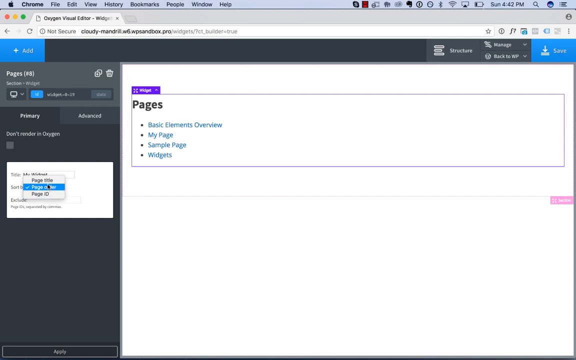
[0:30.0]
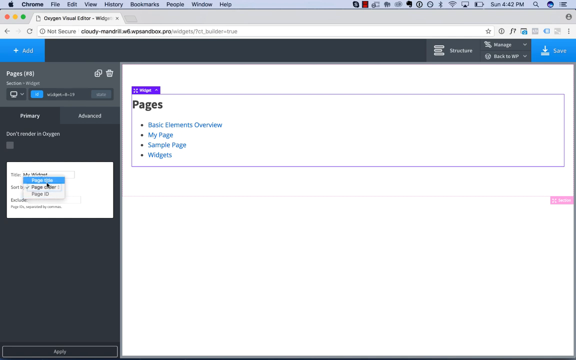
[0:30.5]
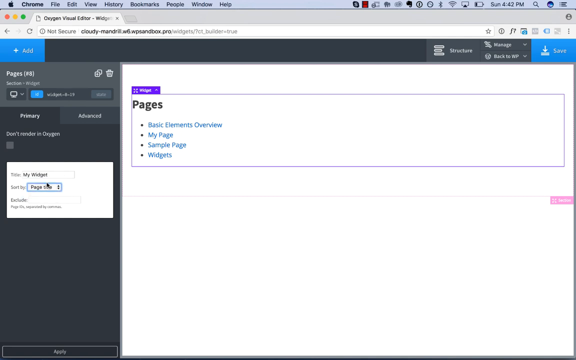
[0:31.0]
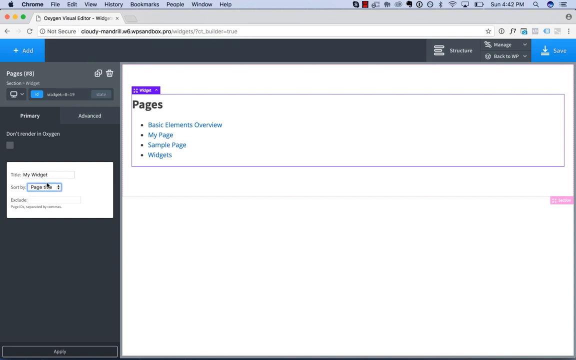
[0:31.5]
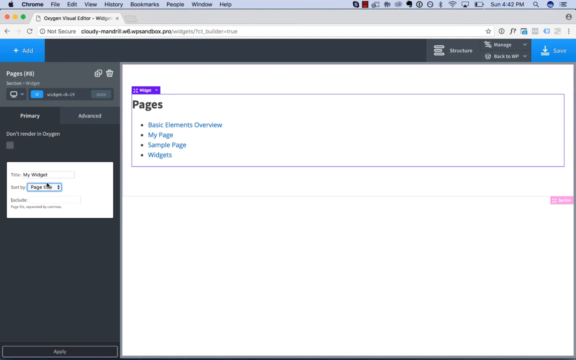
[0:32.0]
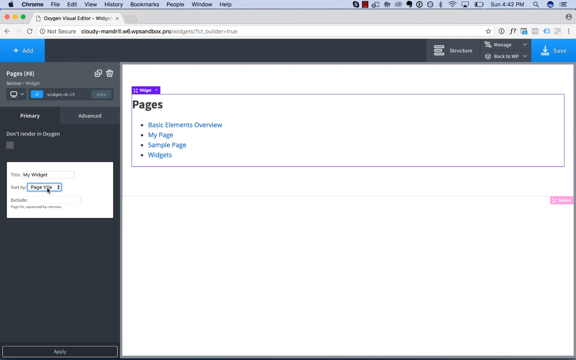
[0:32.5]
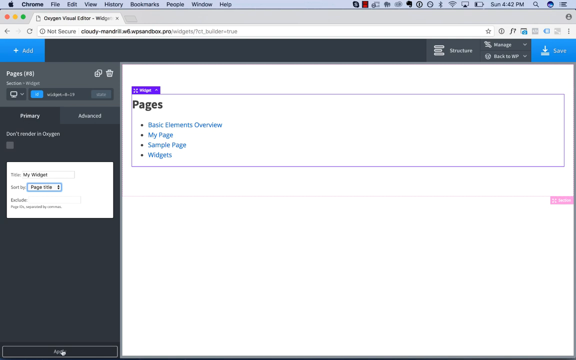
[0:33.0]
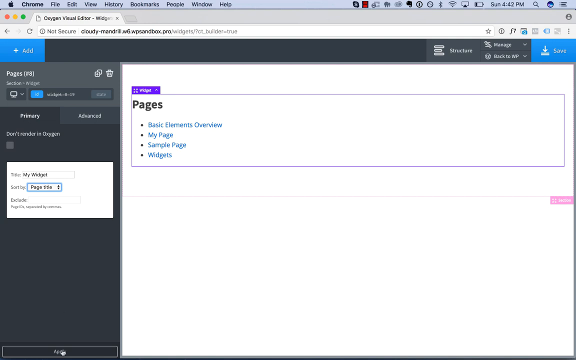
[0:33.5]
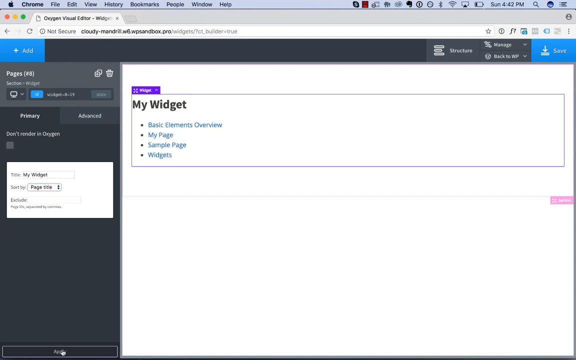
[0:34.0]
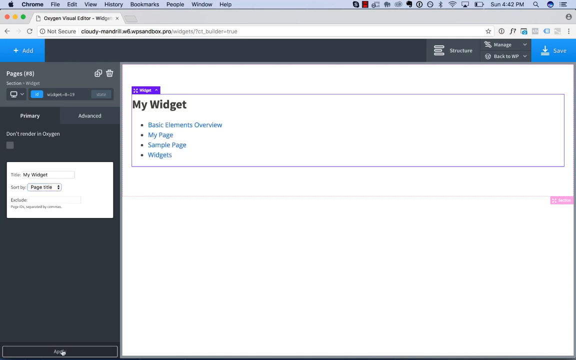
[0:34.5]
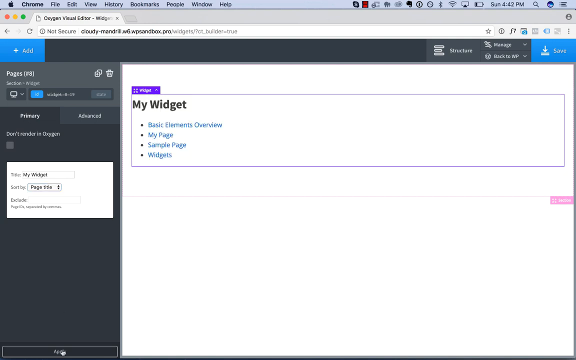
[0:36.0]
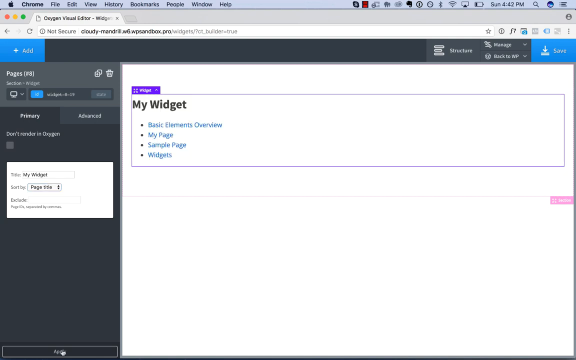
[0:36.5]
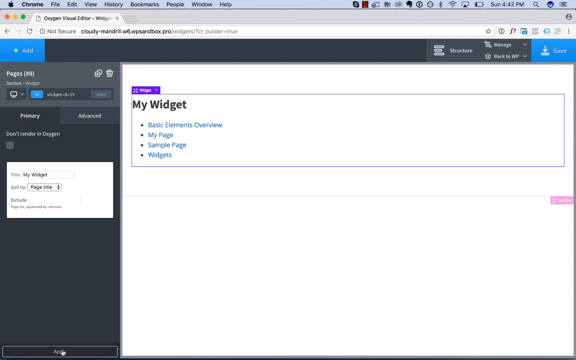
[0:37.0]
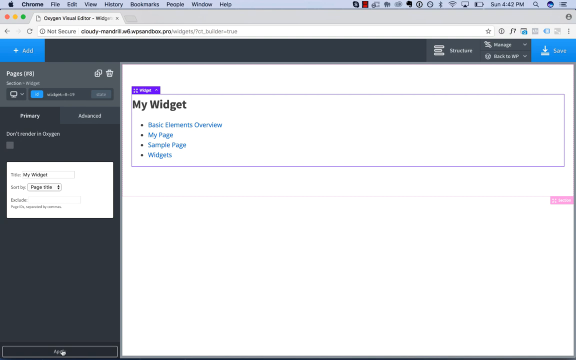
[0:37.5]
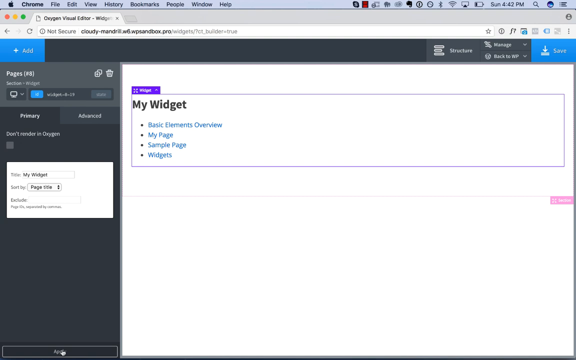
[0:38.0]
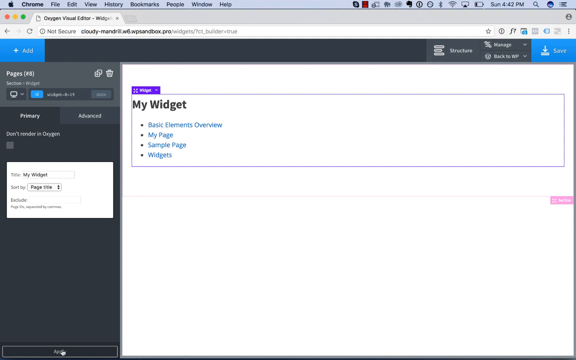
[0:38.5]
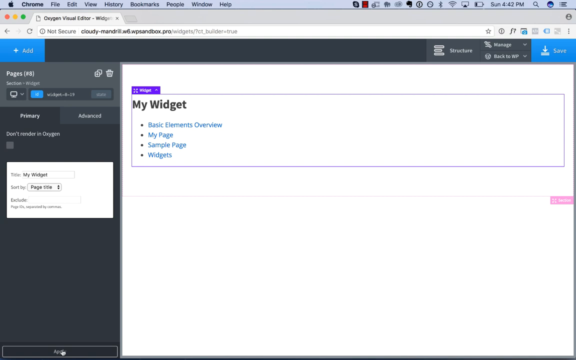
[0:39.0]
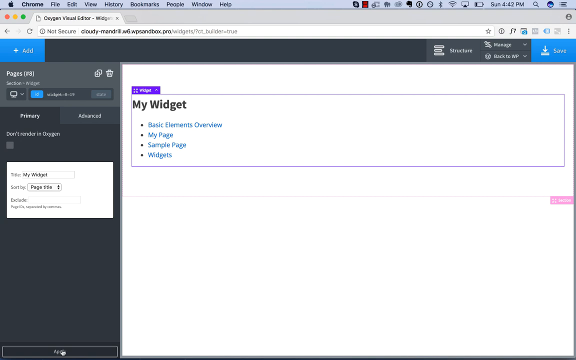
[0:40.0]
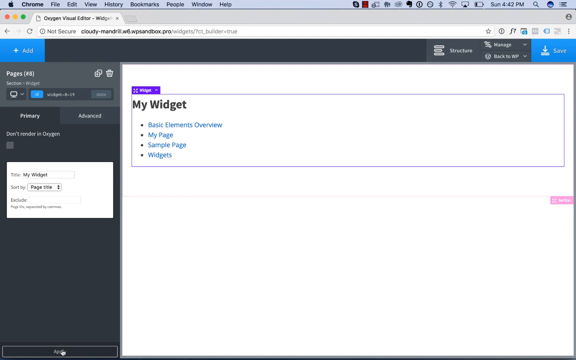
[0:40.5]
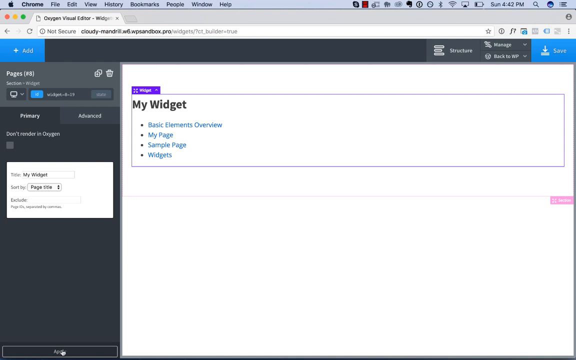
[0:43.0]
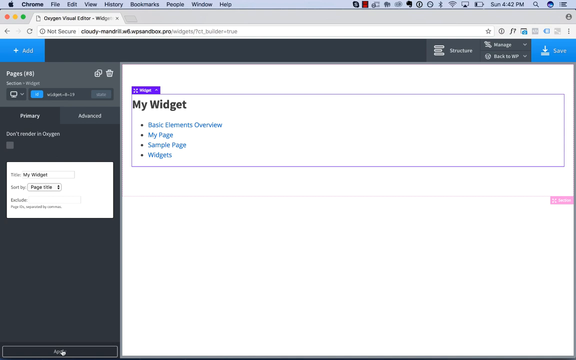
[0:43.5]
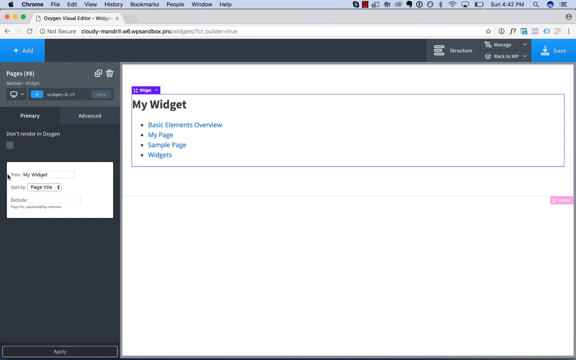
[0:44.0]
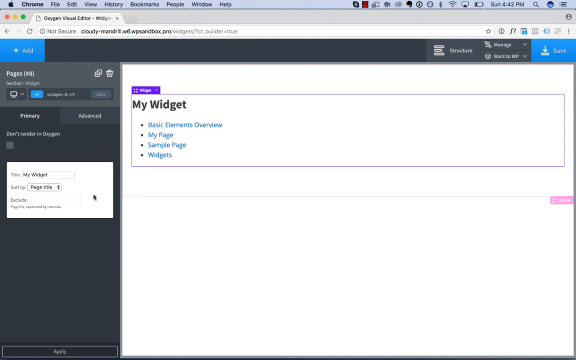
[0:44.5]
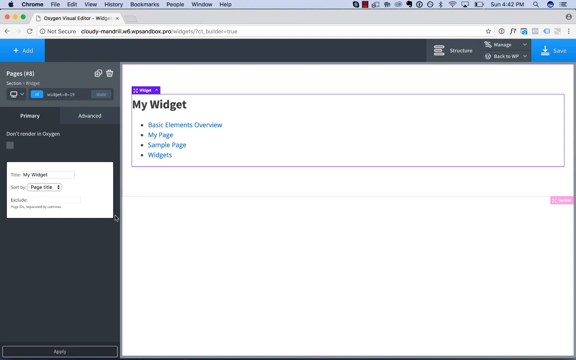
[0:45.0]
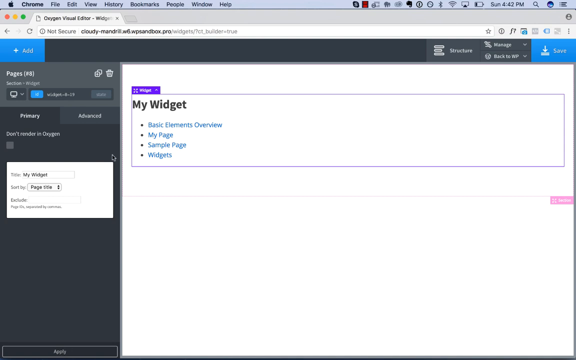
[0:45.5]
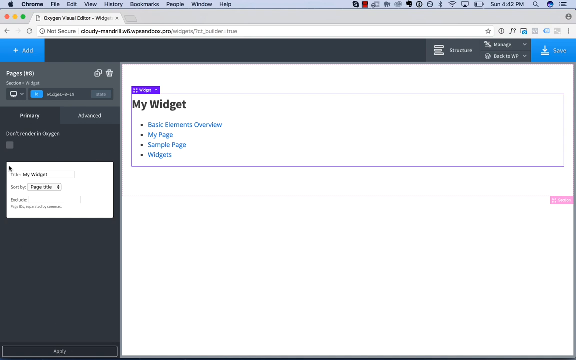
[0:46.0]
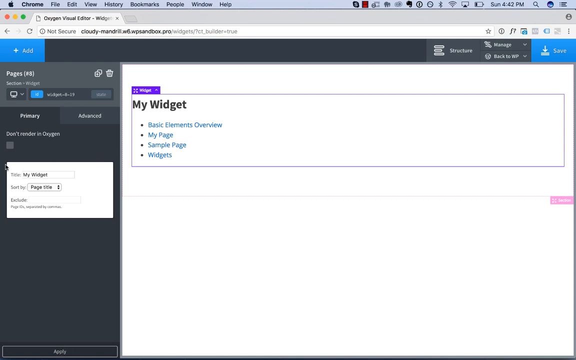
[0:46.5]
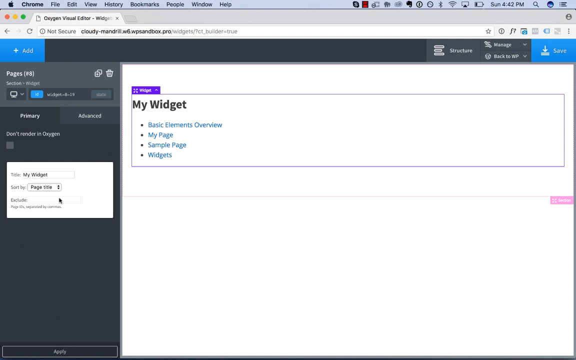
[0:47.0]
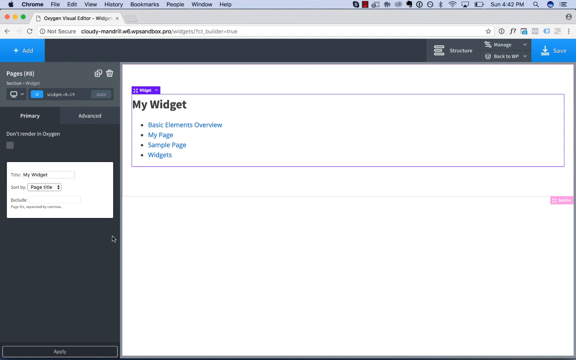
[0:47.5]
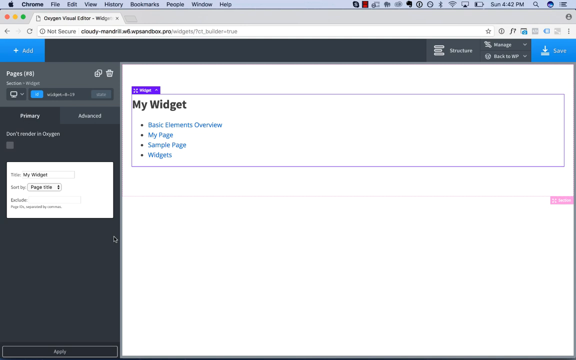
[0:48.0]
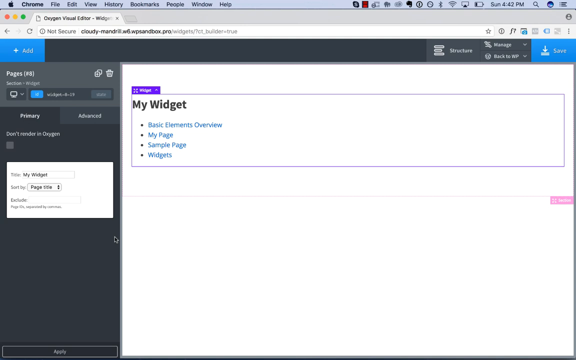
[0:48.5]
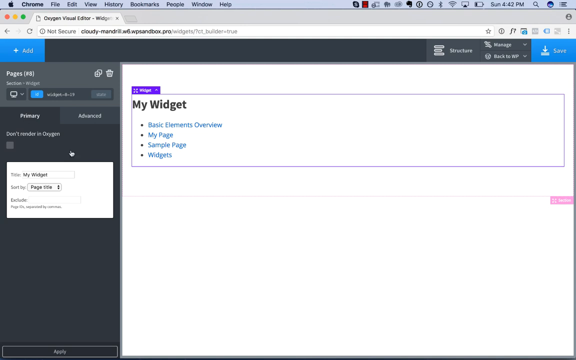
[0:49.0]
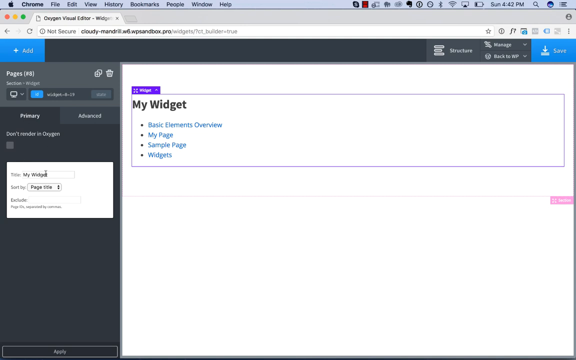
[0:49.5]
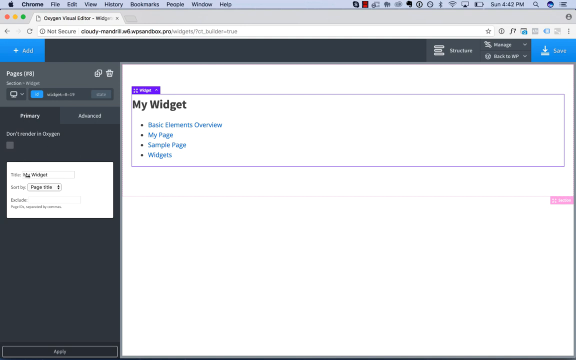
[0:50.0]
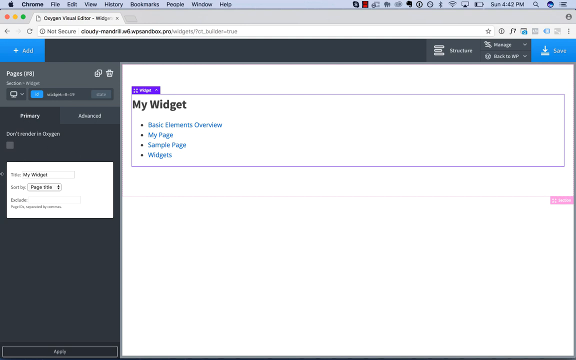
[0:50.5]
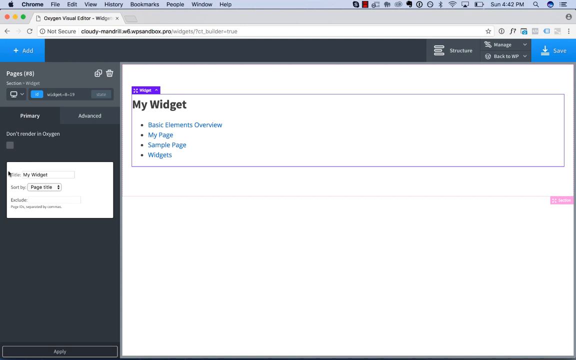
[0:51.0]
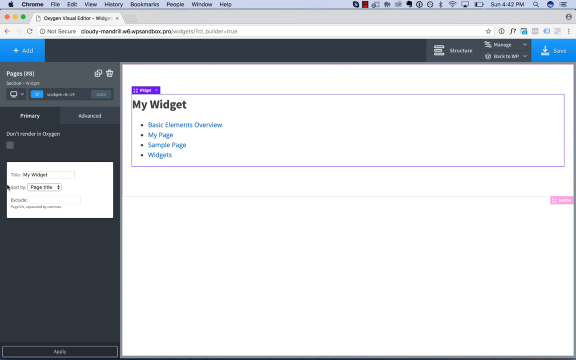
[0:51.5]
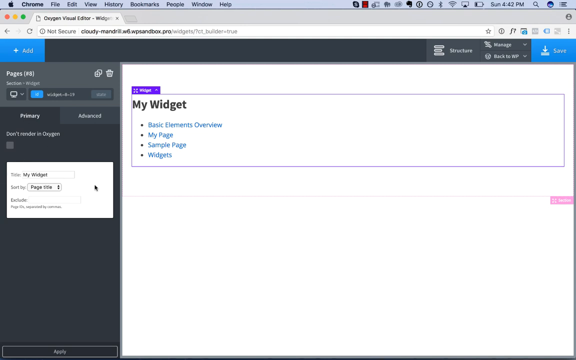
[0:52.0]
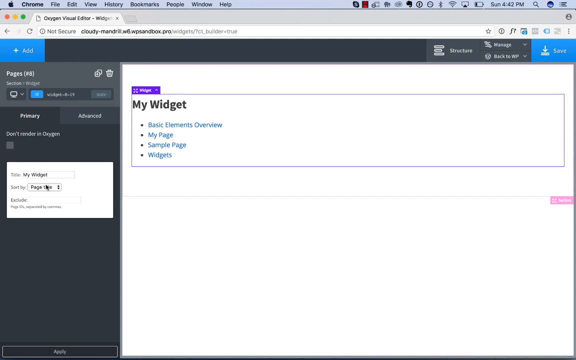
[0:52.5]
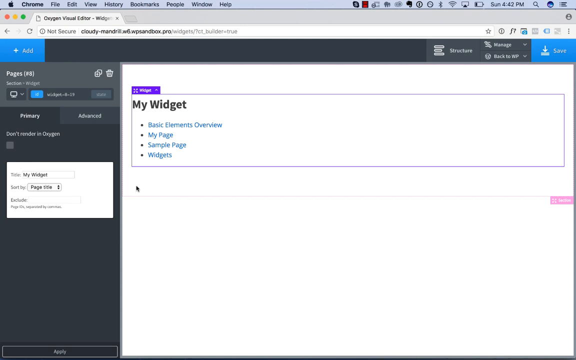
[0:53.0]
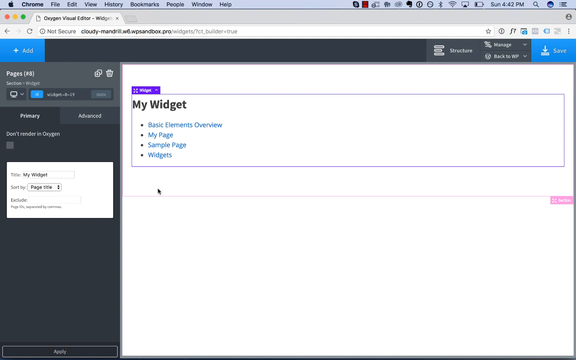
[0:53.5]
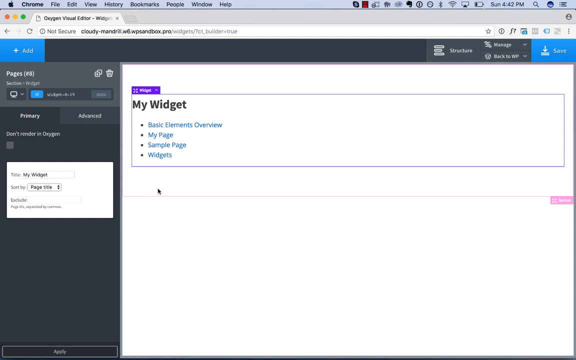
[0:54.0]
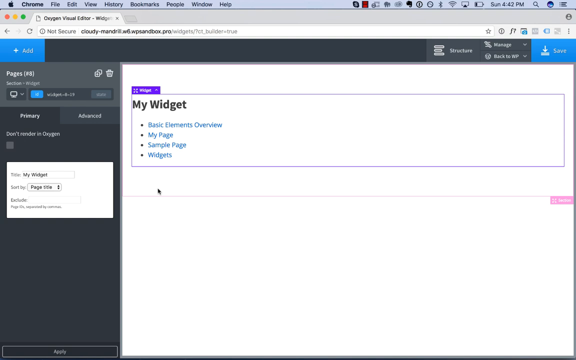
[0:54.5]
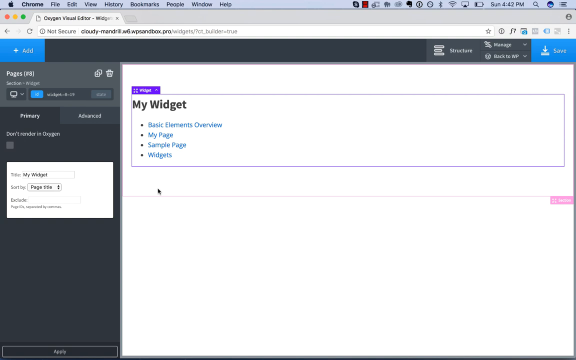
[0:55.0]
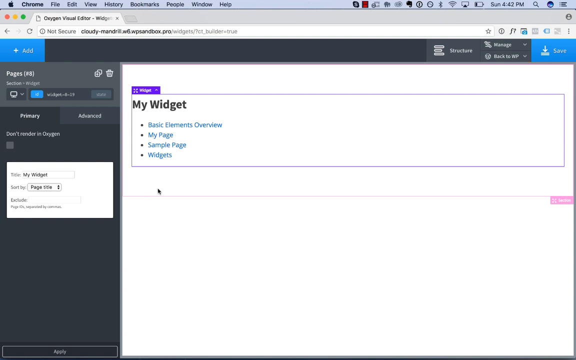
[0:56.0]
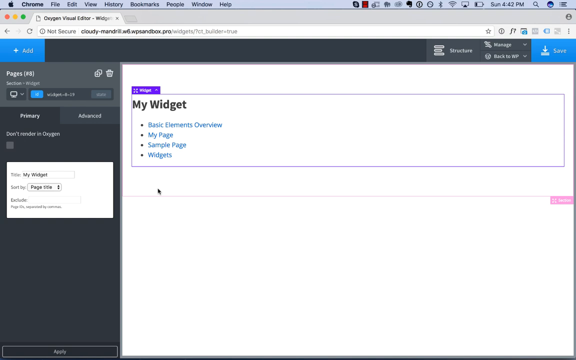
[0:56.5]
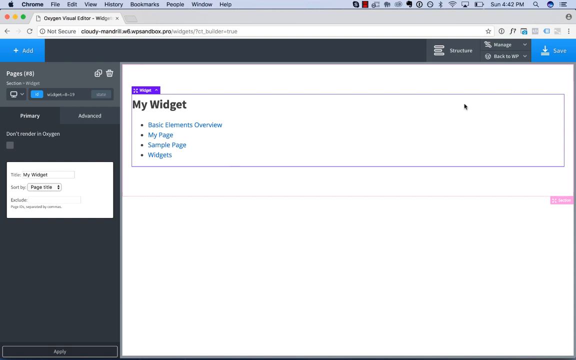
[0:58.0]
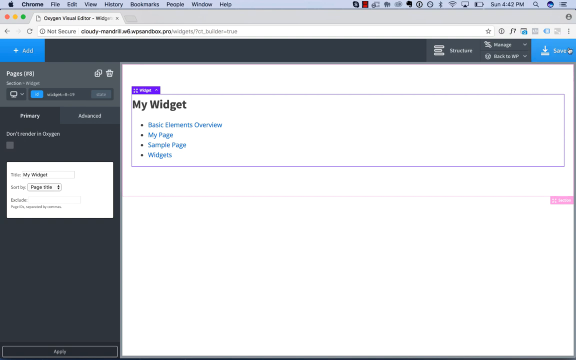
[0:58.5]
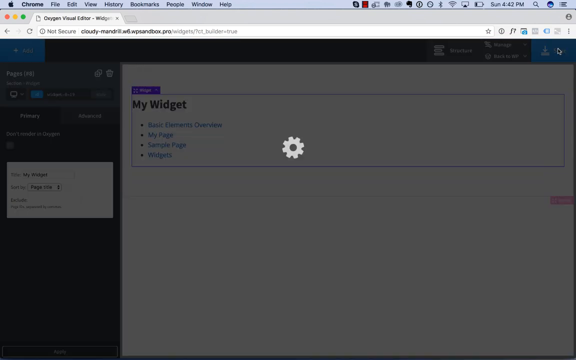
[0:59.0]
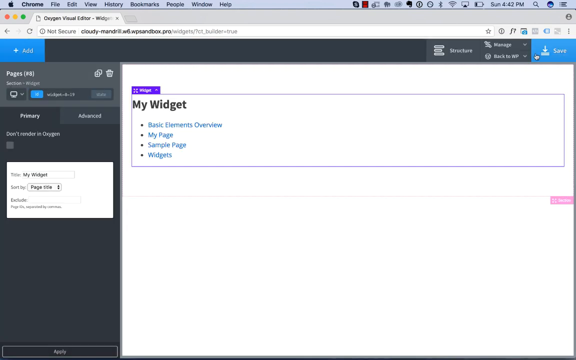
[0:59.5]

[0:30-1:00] A Mac desktop shows Chrome open to Oxygen Visual Editor in a browser tab. The user is on a WordPress widget to create a page; on the left-hand side they go to page view and click, then click the Apply button at the bottom to title their page My Widget, apparently sorting by page title and applying it. They move the cursor around, go to Save at the top right, and return to their page after saving. The page looks fairly blank so far, with blue Add and Save buttons at the top on the left and right sides. The page shows "basic elements," "overview," "my page," "sample page" and "widgets."